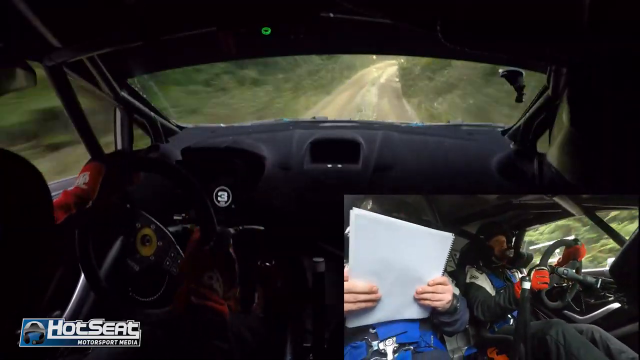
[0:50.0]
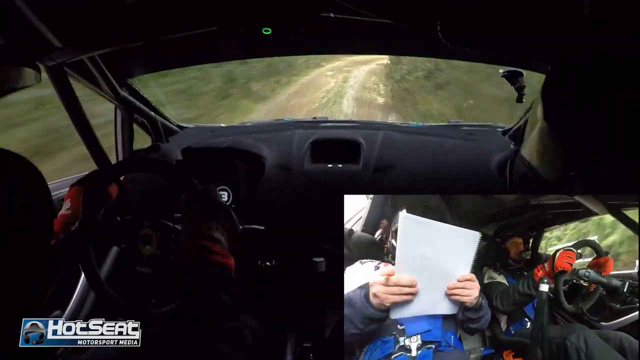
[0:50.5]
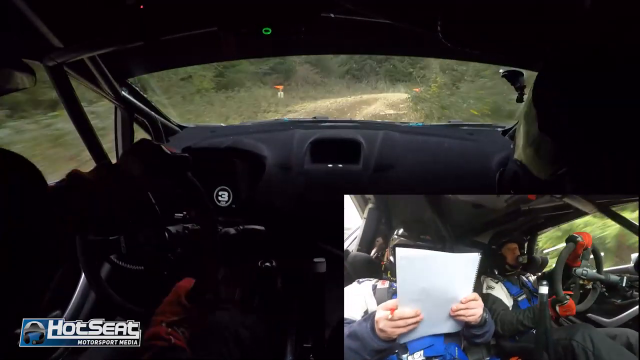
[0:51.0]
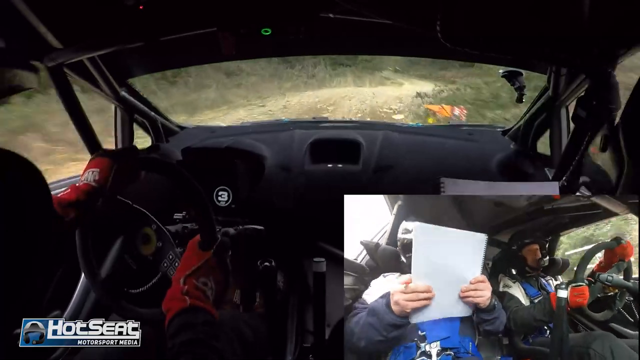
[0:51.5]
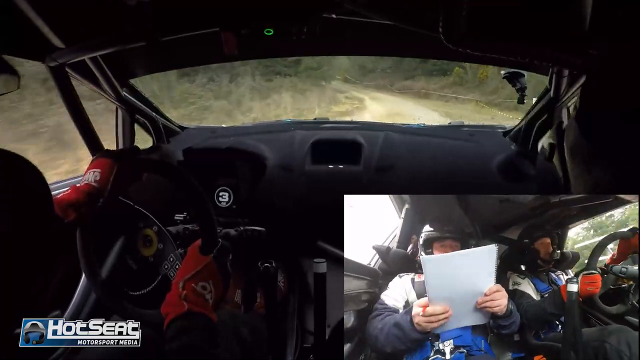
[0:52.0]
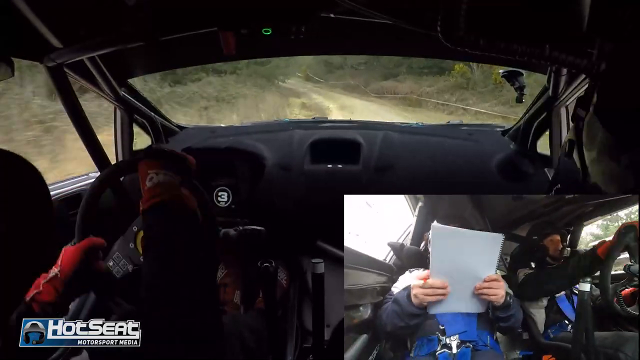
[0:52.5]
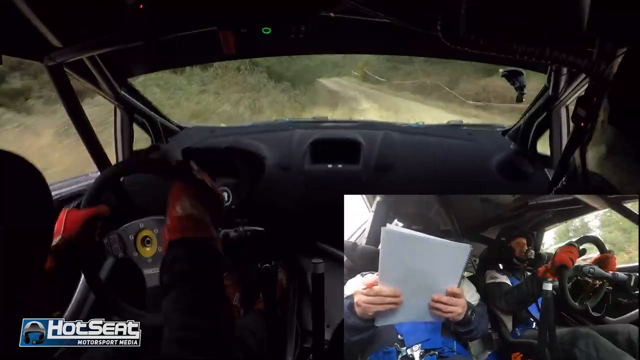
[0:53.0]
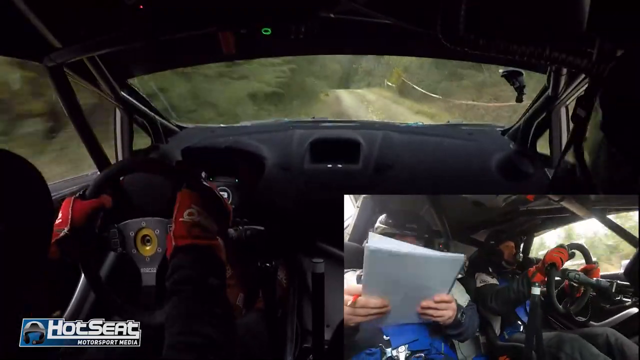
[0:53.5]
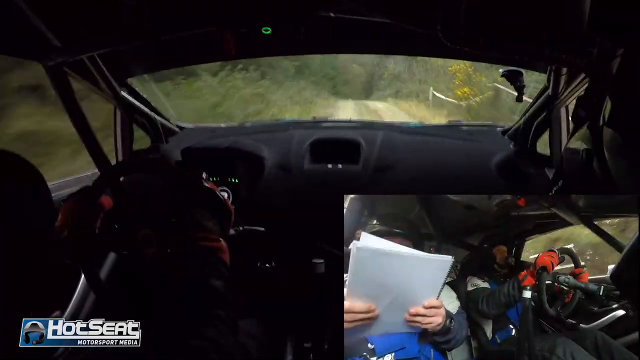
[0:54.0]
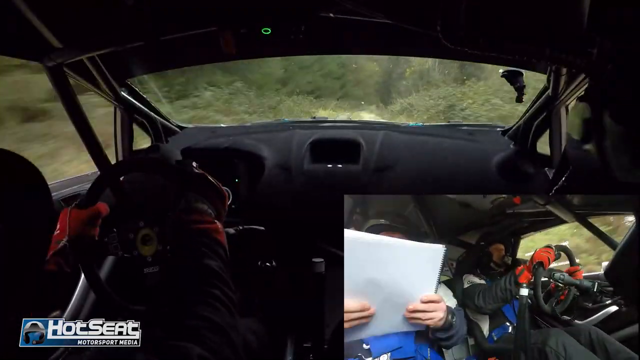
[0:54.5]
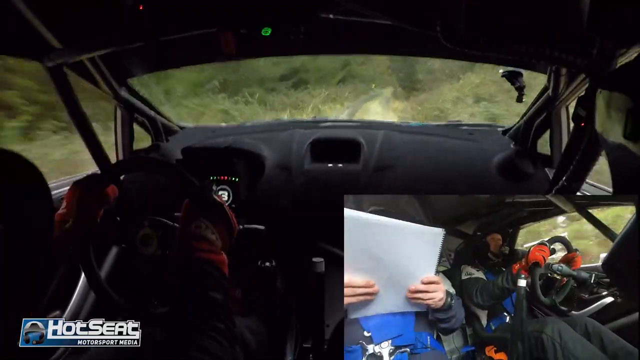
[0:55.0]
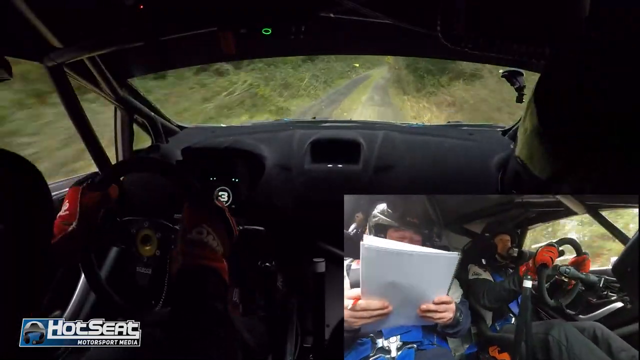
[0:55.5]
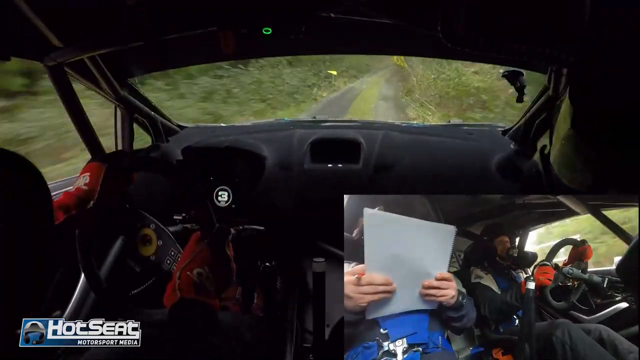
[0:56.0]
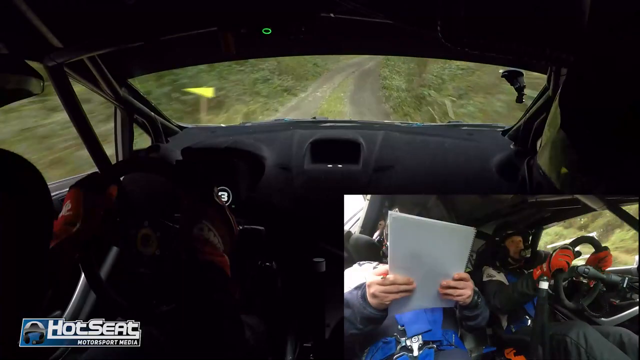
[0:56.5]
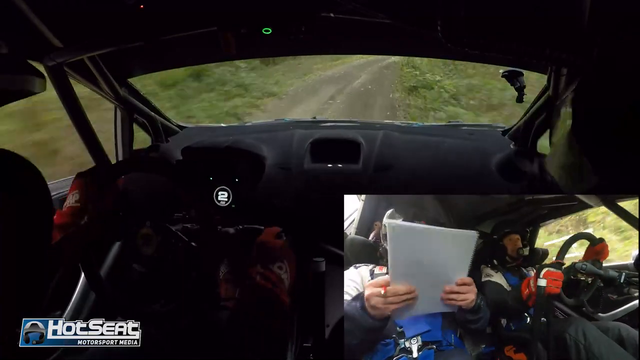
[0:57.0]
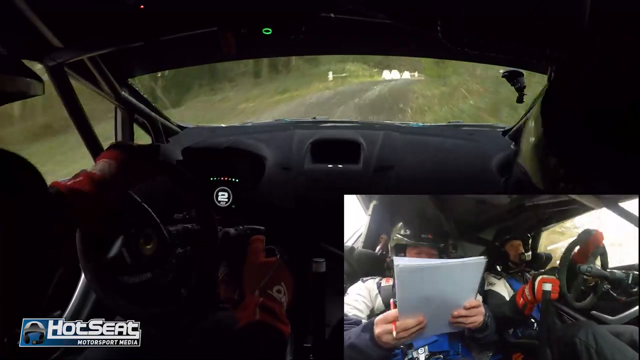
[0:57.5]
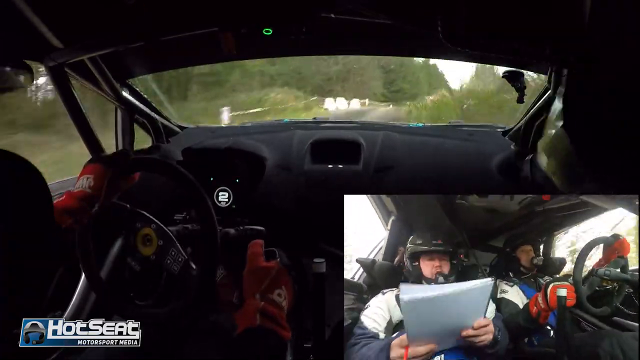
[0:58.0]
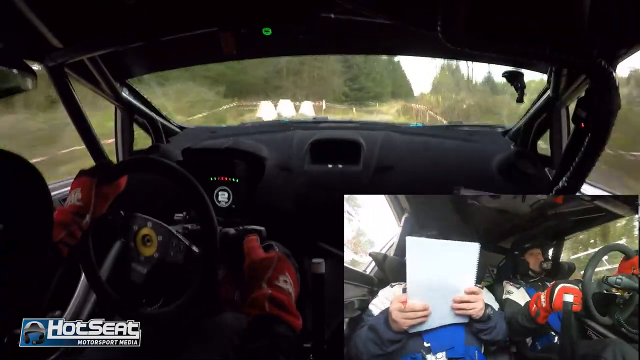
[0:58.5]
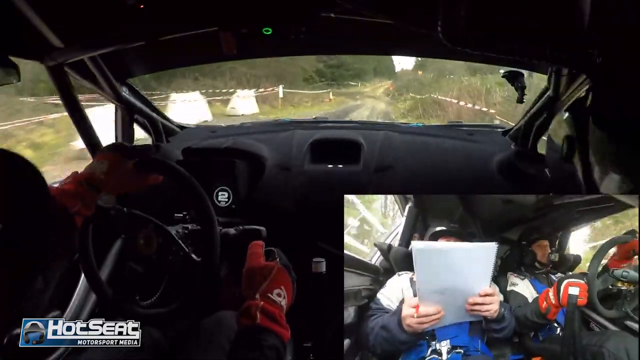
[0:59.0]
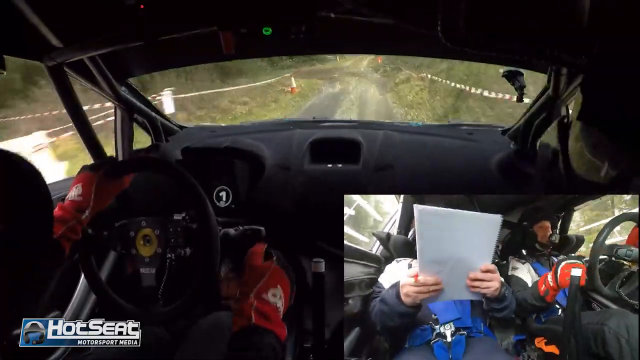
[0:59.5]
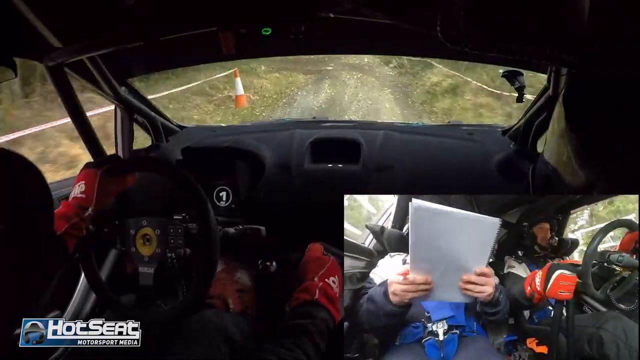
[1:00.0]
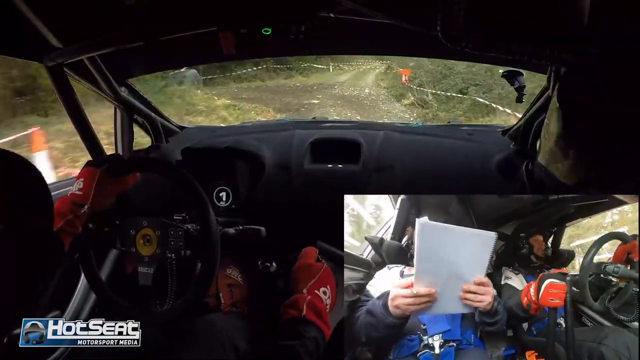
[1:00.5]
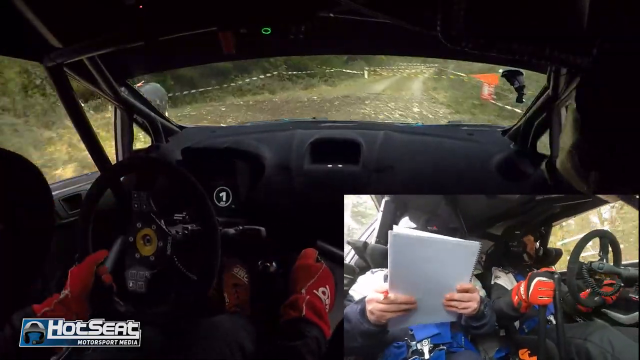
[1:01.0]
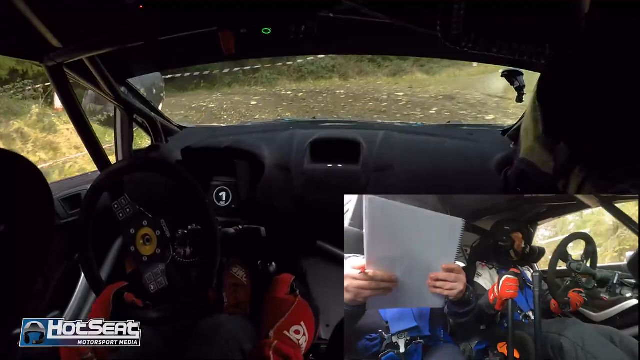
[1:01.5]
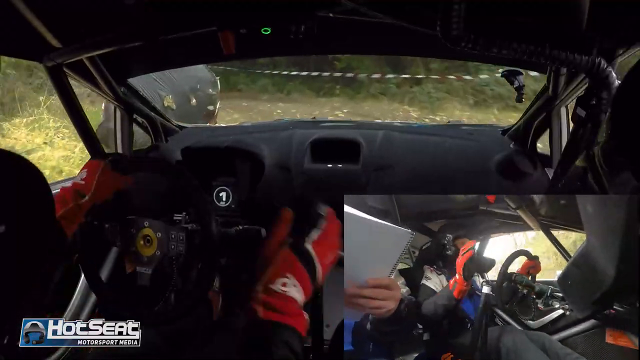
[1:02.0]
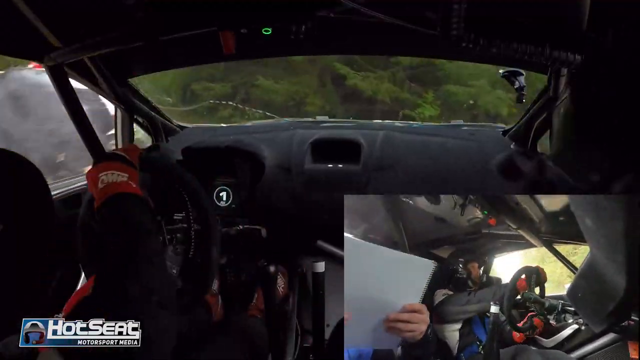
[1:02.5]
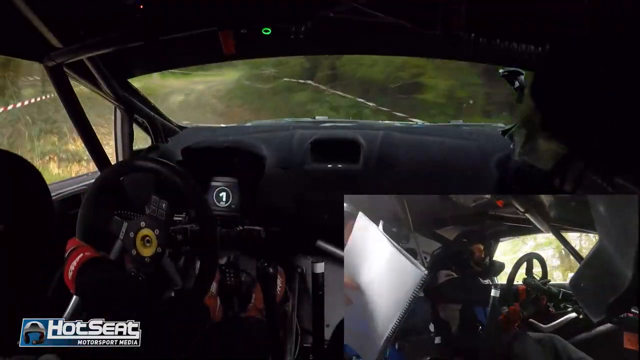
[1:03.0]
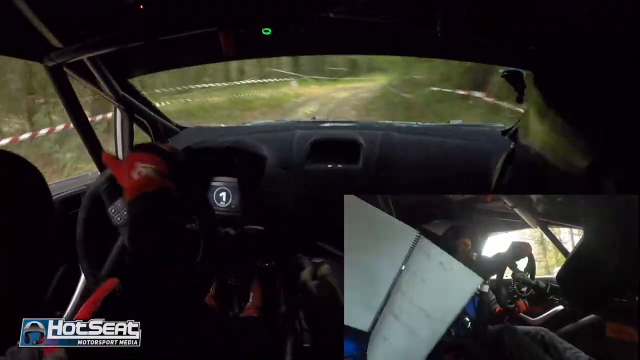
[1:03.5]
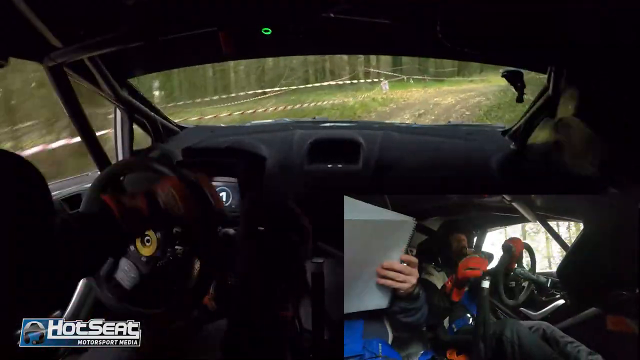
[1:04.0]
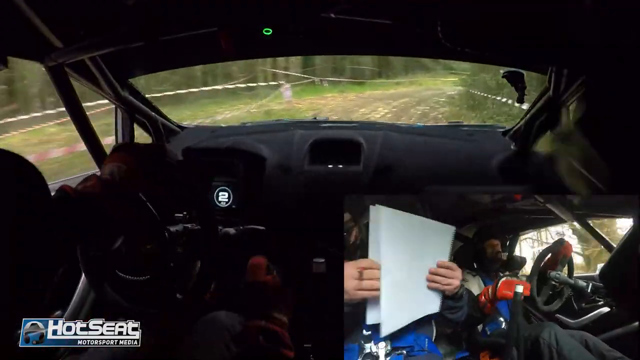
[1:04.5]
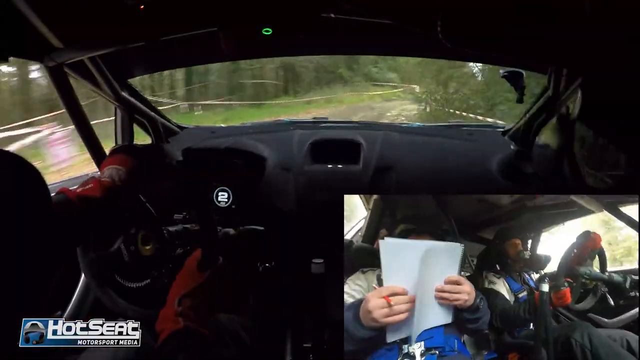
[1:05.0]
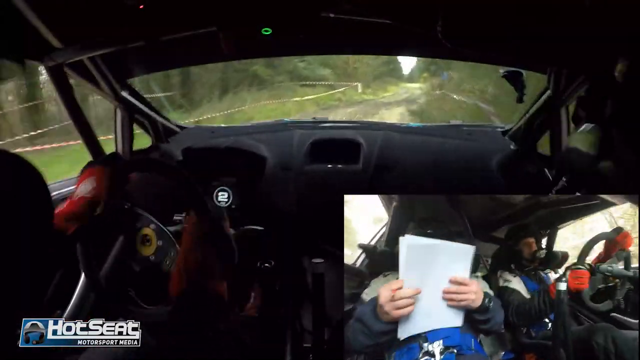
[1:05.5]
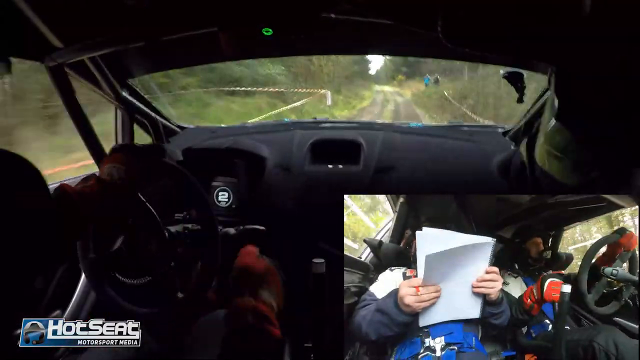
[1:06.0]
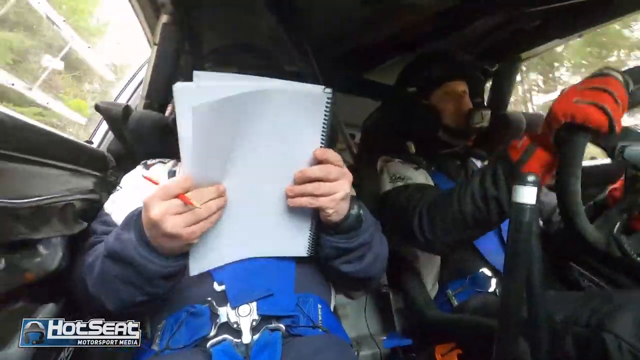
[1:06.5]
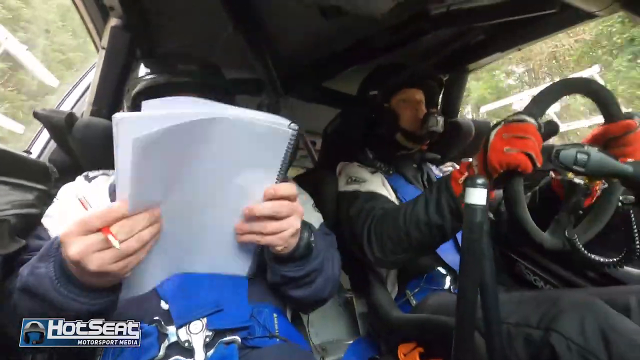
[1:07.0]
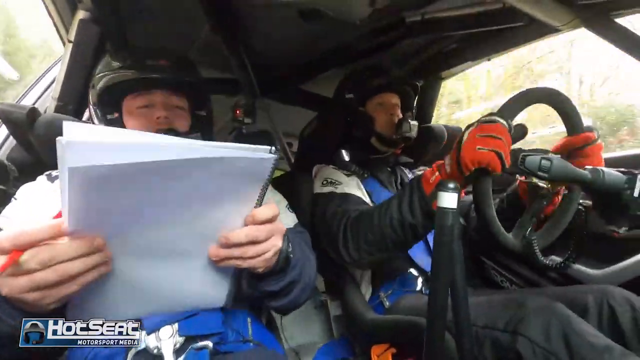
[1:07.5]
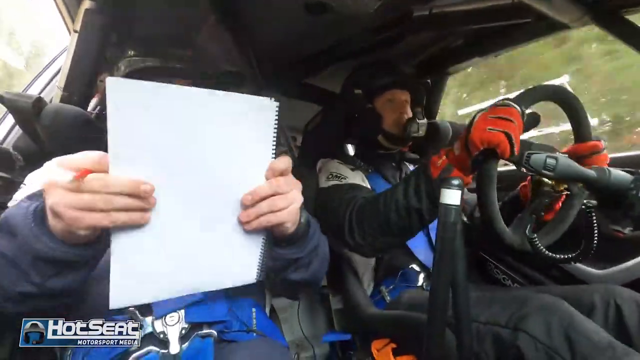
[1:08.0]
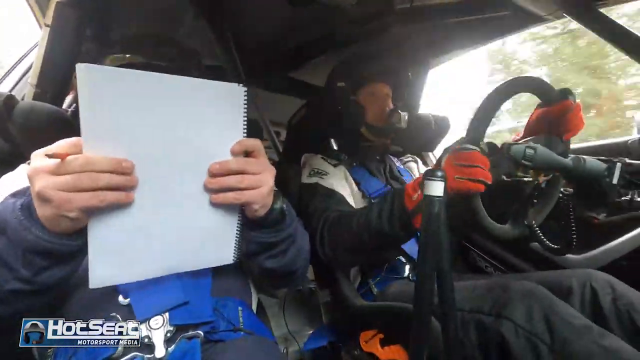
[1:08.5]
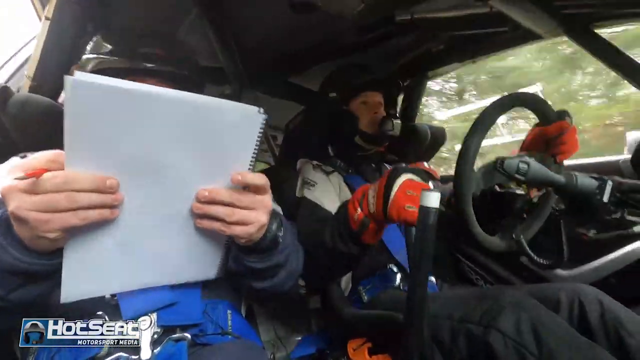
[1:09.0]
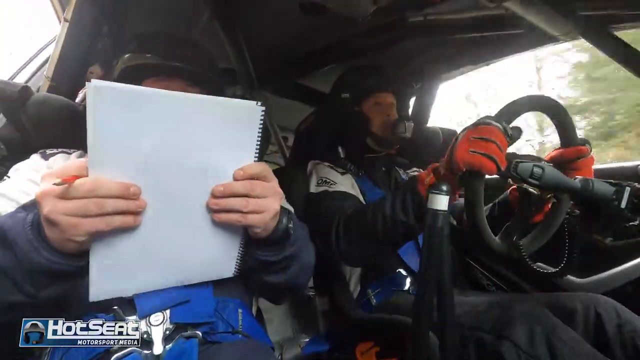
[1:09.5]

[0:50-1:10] The men continue driving, and the car moves so fast that little can be made out besides trees. It looks like they might be in a more residential area rather than a motocross park, since at certain points there may be mailboxes, and there is some type of line, possibly poles, that they pass along. At one point it almost looks like they are walking. The camera then switches to the interior of the car, where the passenger is still holding the papers, now visible as a spiral notebook, and he has a pencil in his hand, but he is never seen writing; both of his hands stay on the paper. The other man keeps driving. The gear shifter is very high up and slender, not placed like in a normal car. They slow down a bit as the driver makes some turns, and the video keeps switching between the camera views.